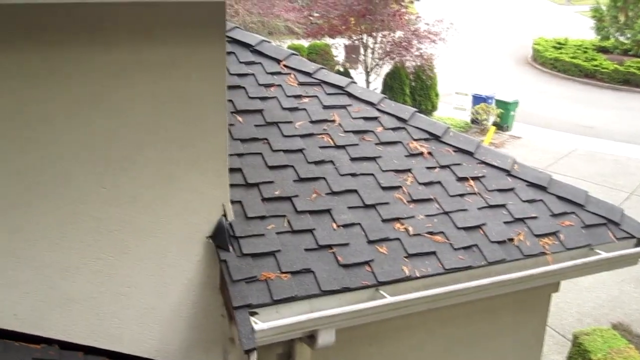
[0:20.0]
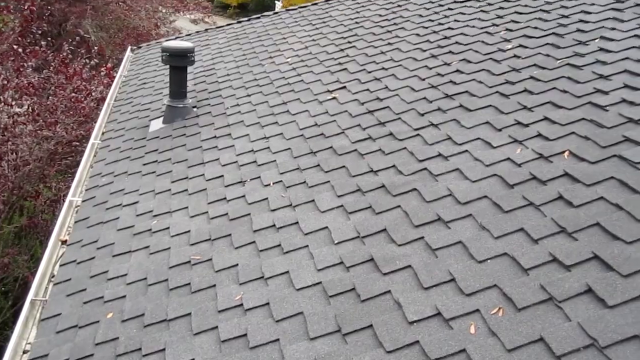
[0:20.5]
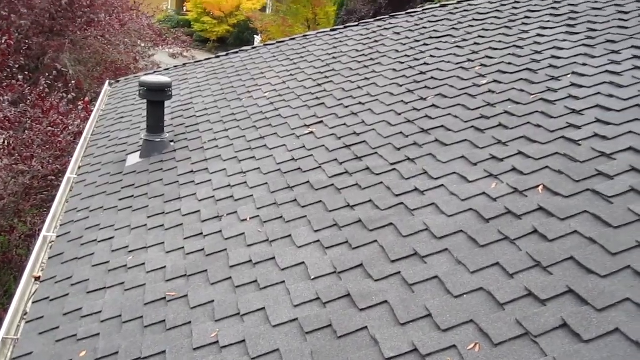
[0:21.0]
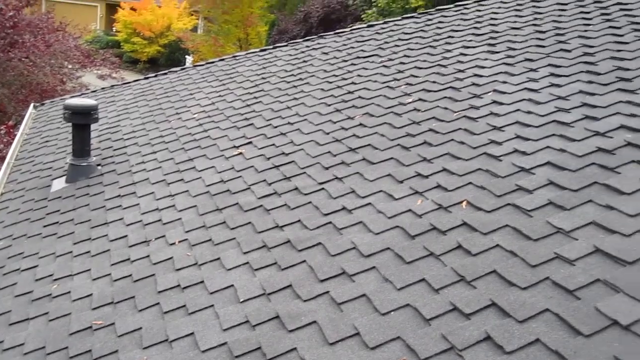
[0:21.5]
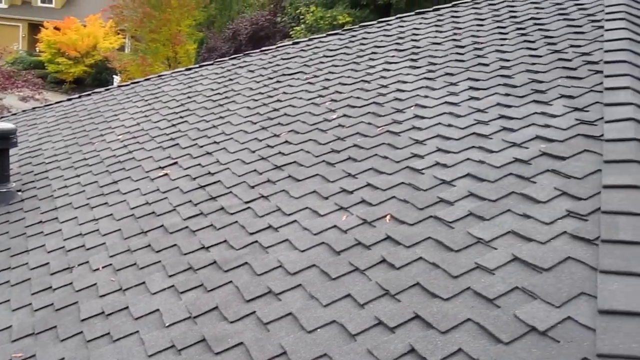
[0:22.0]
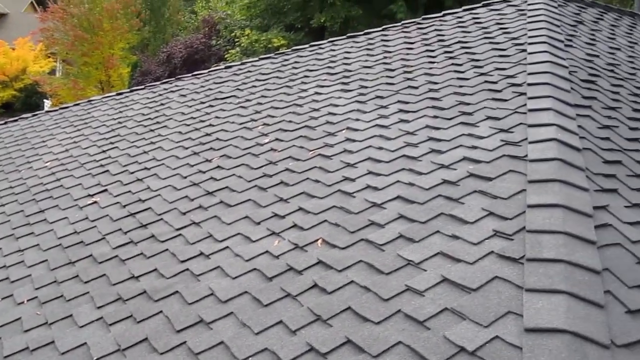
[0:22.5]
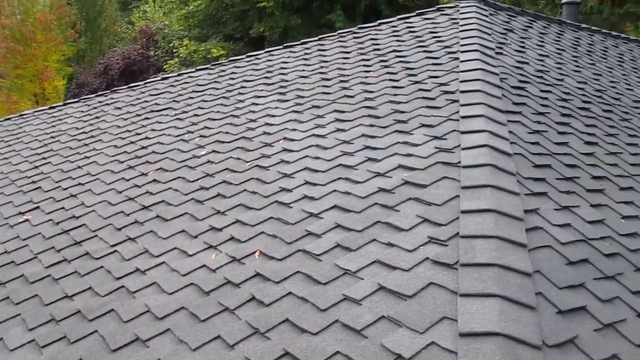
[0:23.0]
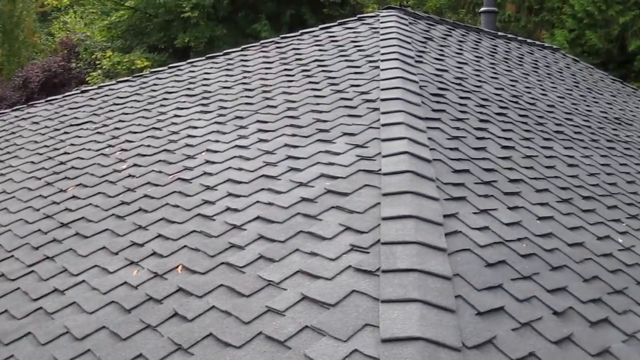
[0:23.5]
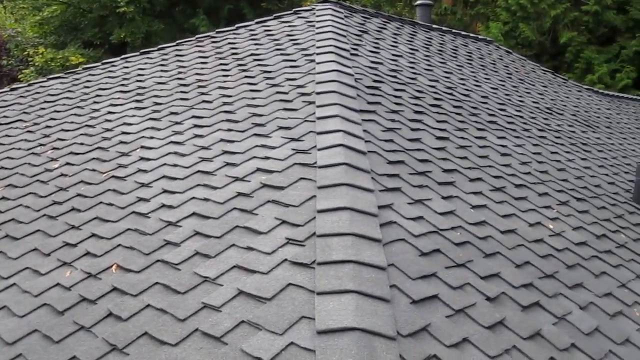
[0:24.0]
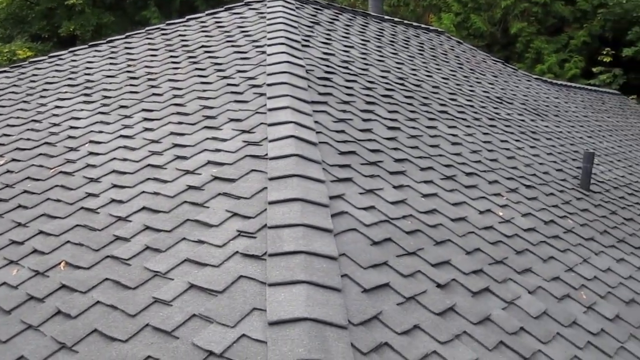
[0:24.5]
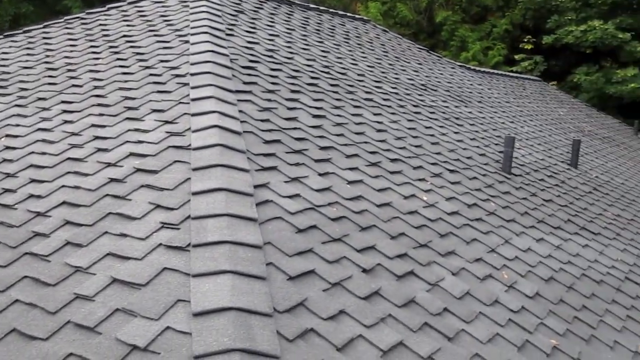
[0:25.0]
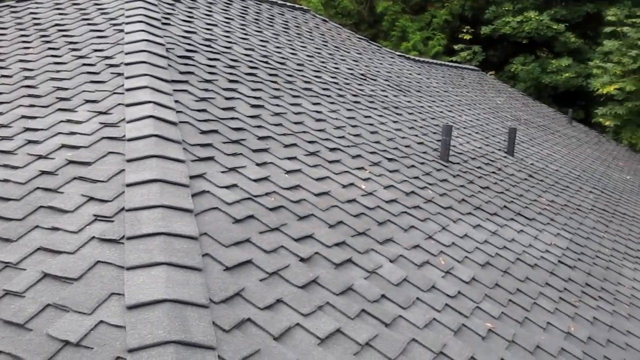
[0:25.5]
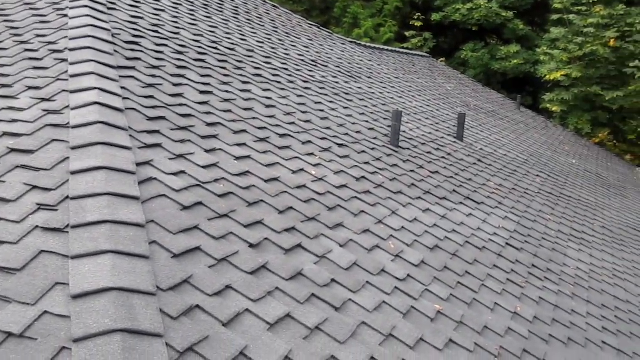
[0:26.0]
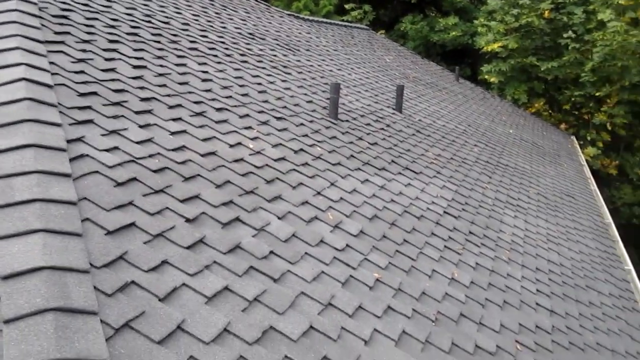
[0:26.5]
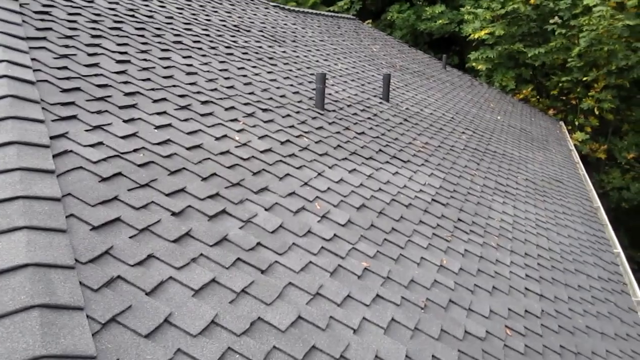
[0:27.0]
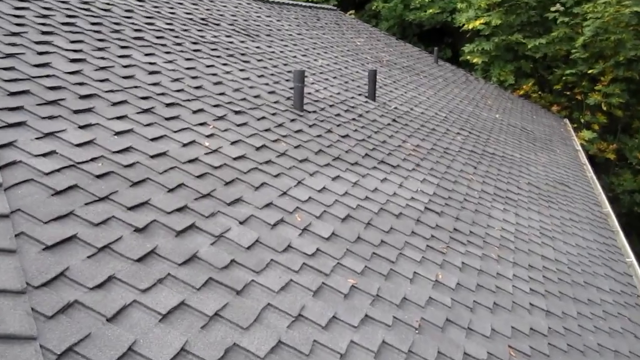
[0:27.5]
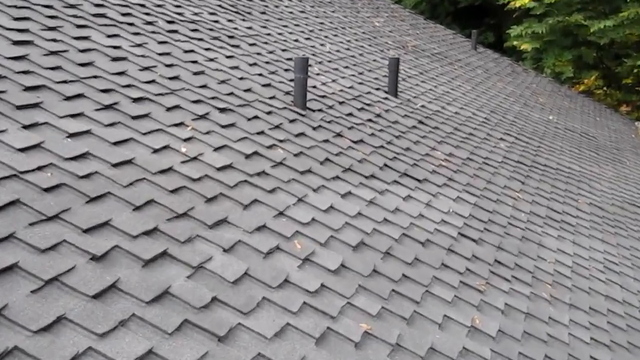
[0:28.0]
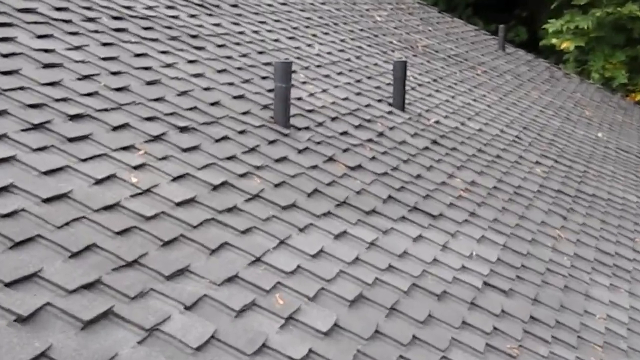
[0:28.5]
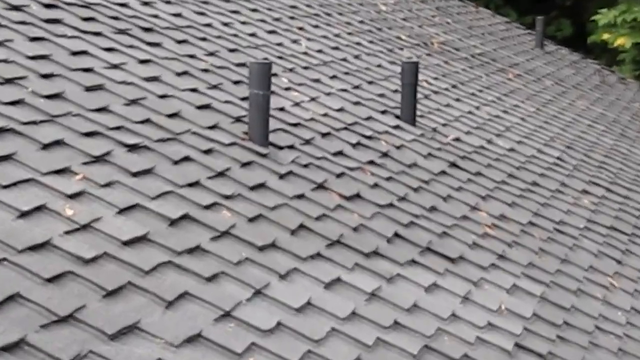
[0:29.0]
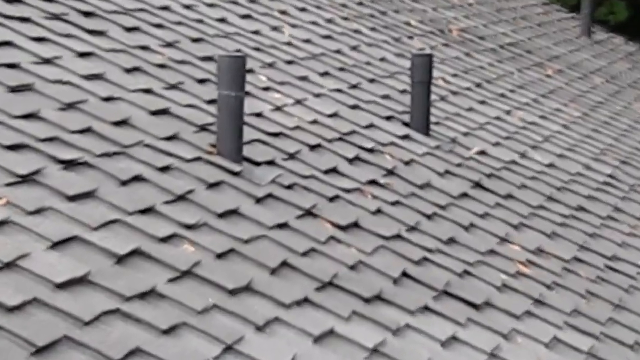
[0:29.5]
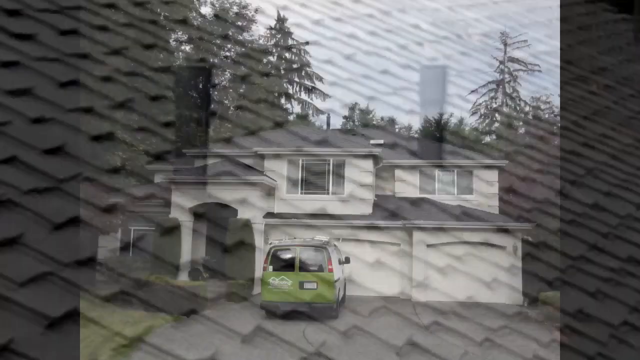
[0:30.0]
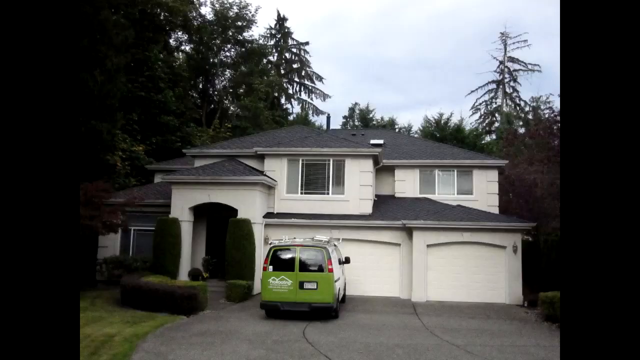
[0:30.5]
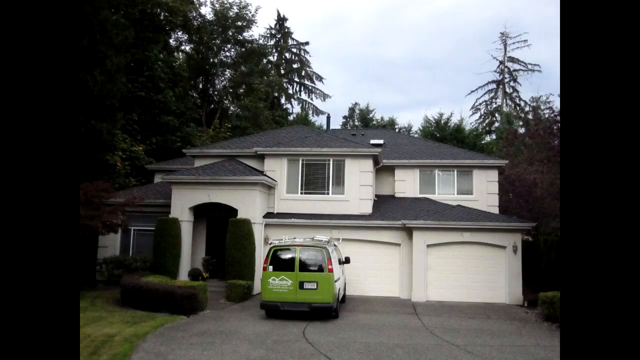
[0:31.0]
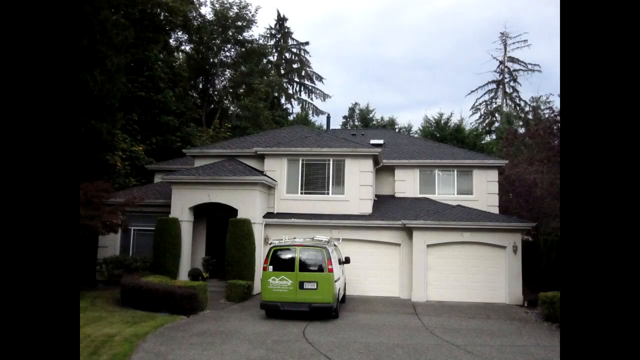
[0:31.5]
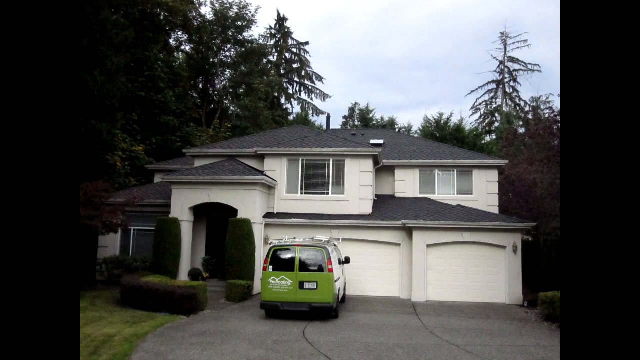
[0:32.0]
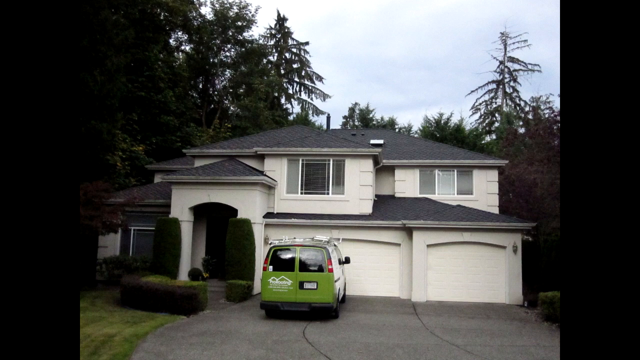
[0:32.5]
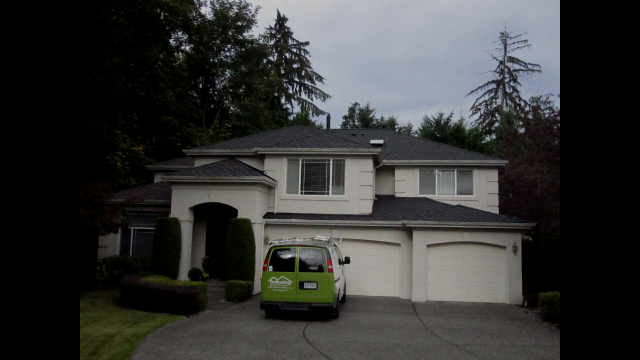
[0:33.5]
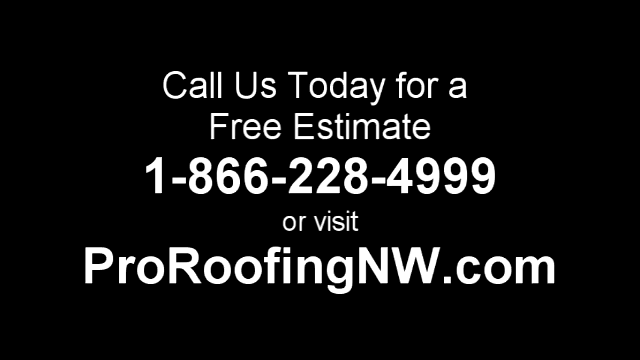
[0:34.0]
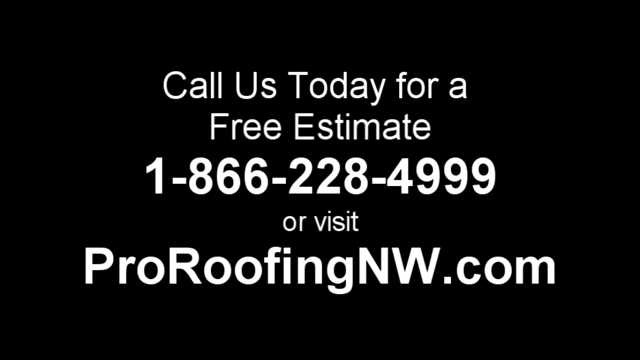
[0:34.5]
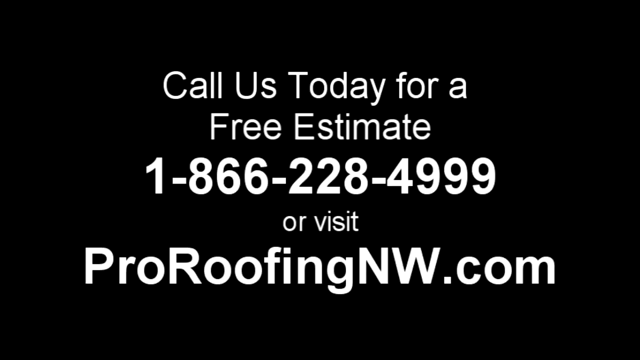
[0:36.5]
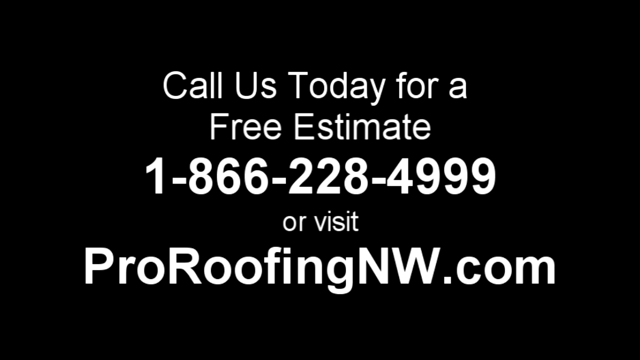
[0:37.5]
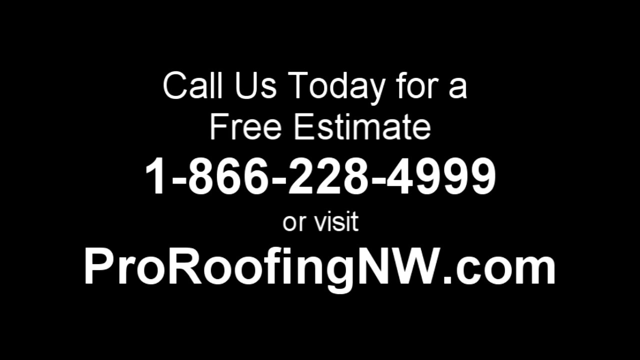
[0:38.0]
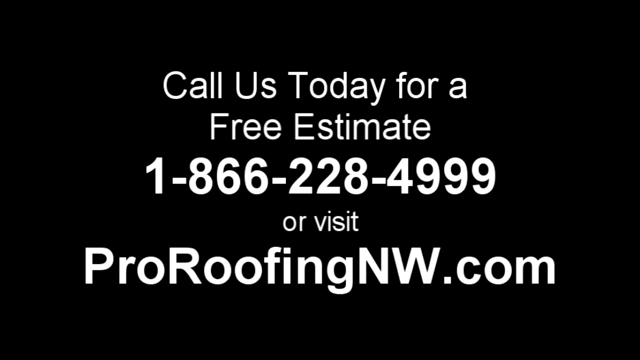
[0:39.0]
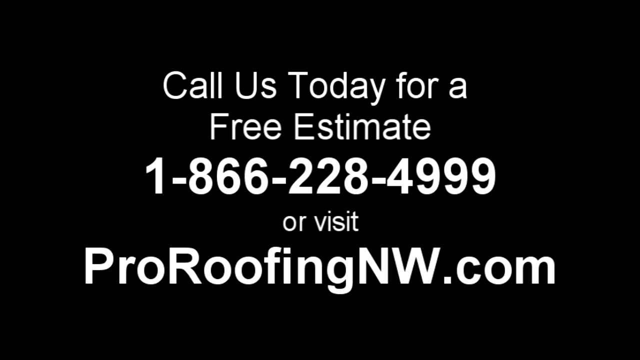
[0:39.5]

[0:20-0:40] A different angle of the newly completed roof shows a metal exhaust pipe running out of the top of the roof. All of the shingles look very high quality and freshly laid, with no wear and tear, and they fit together uniformly. Later, a zoomed-out front view of the house shows the entirety of the front roof work. The back of the house is hidden, and a van for the roofing company is visible; the van is white with green back doors and a logo on it. Trees all around the house grow taller than the house. The house is a white-beige color and has high archways leading into the front door. The video ends with an advertisement for the company that says "call us today for a free estimate," gives the phone number, and then says "or visit" the given website.